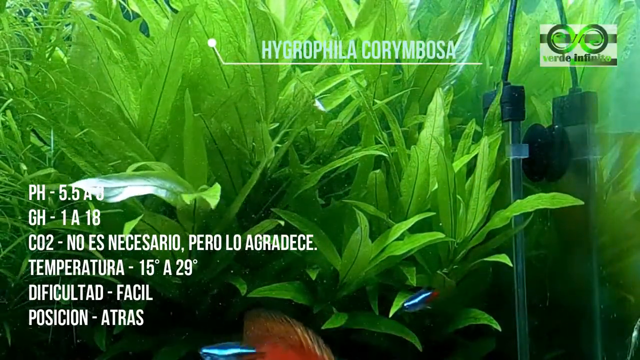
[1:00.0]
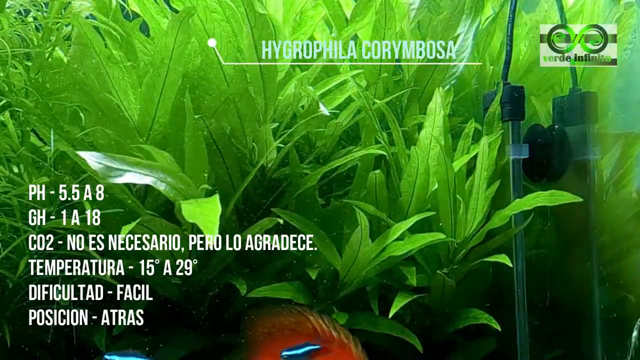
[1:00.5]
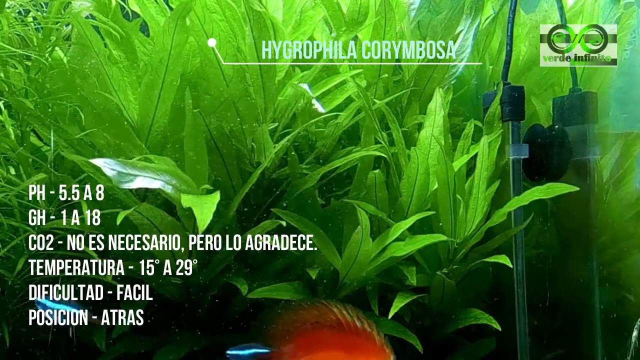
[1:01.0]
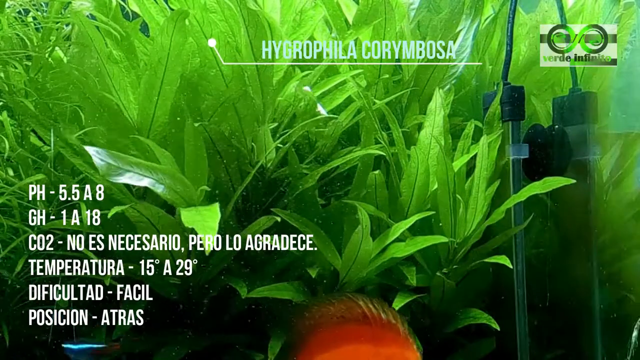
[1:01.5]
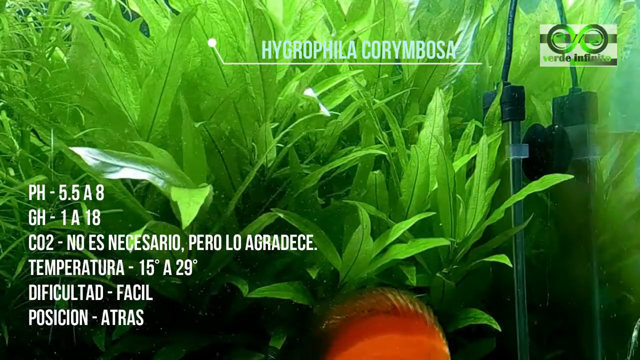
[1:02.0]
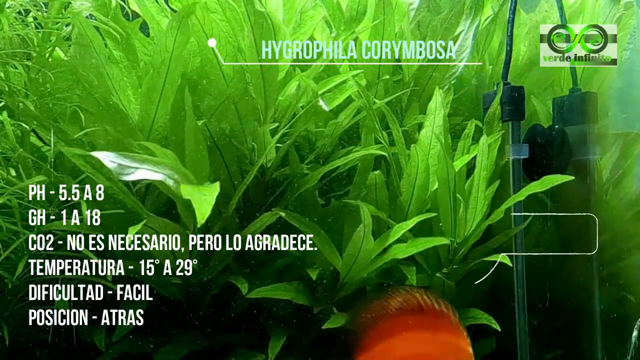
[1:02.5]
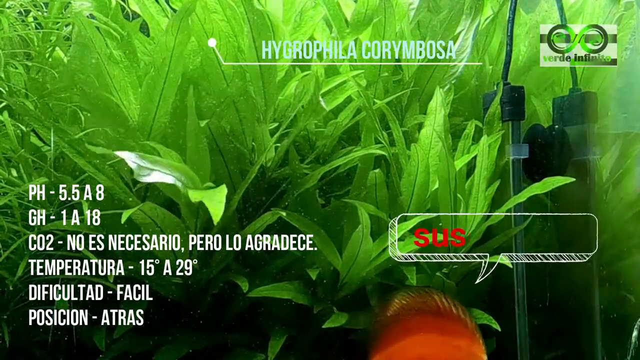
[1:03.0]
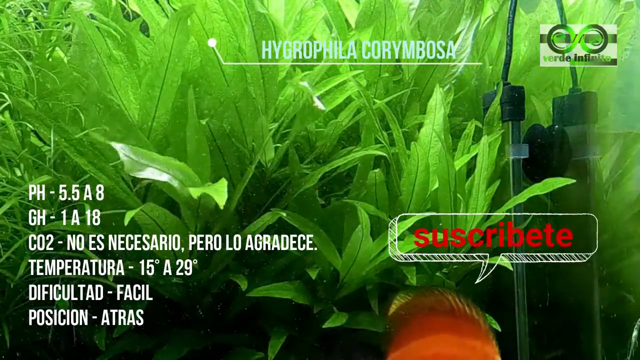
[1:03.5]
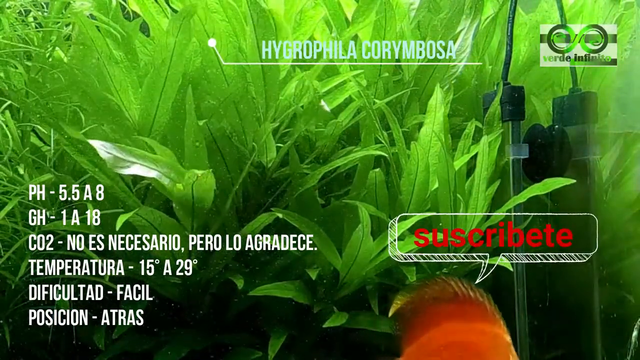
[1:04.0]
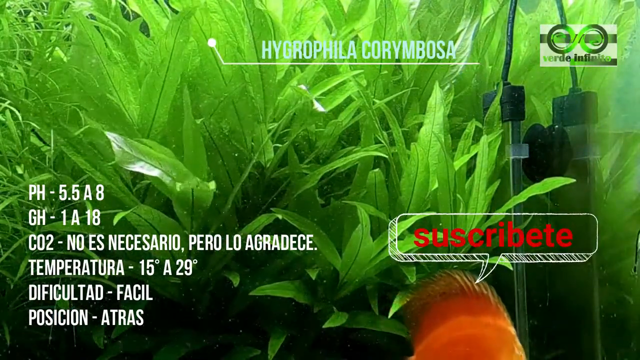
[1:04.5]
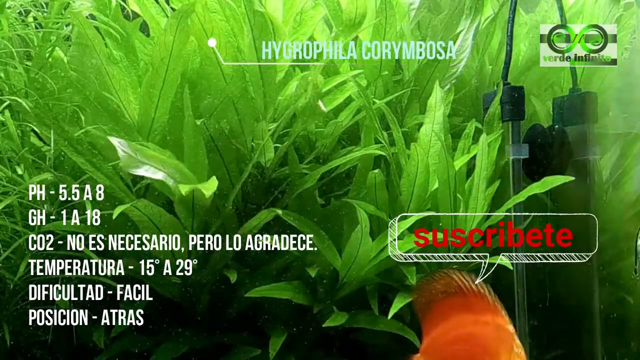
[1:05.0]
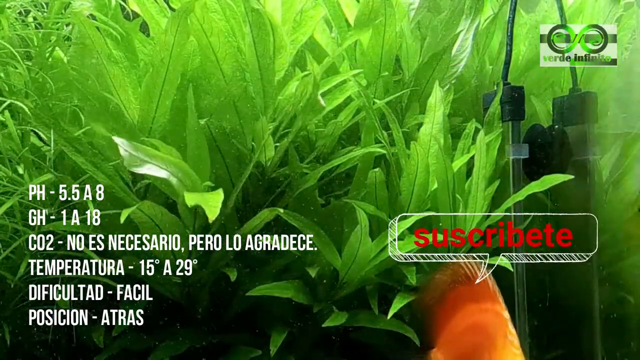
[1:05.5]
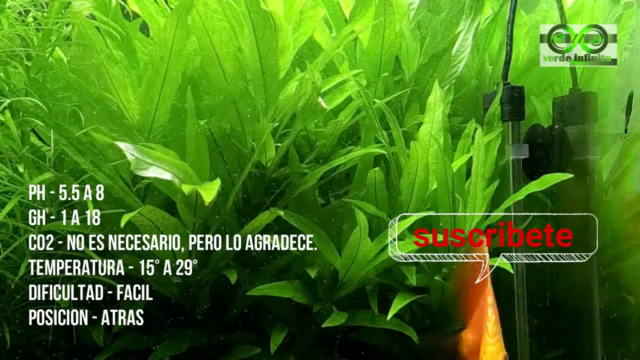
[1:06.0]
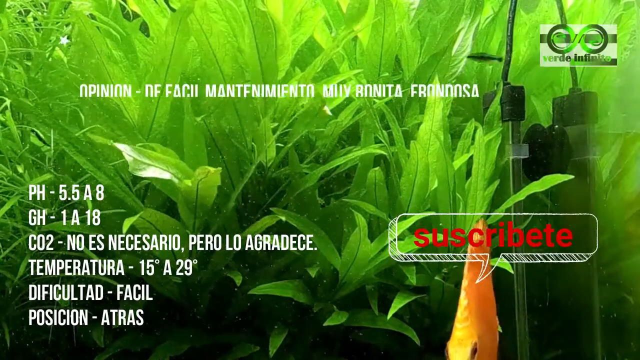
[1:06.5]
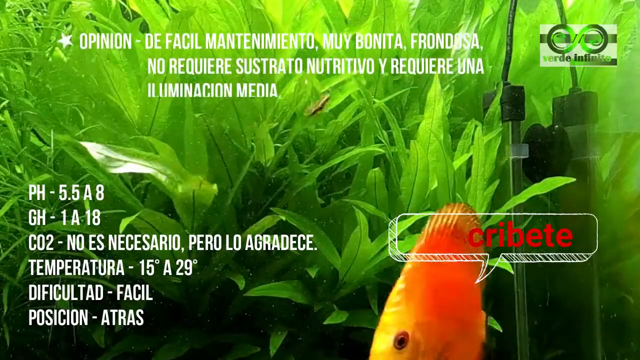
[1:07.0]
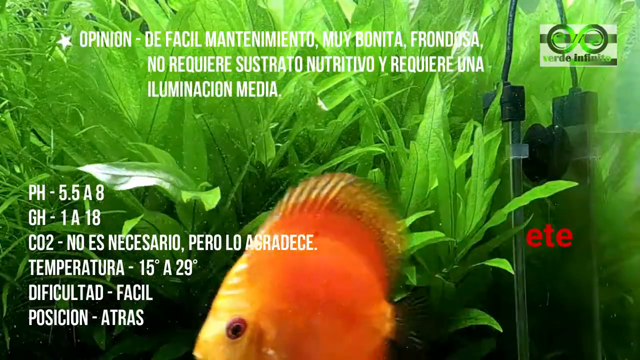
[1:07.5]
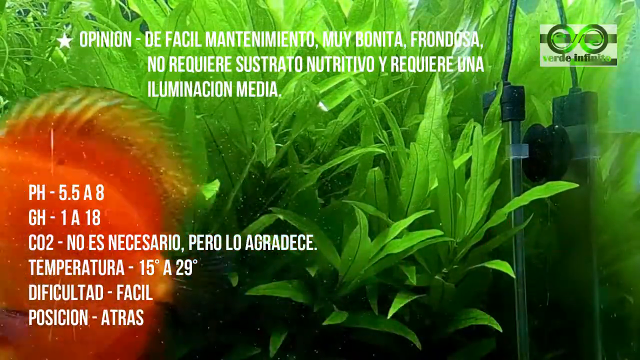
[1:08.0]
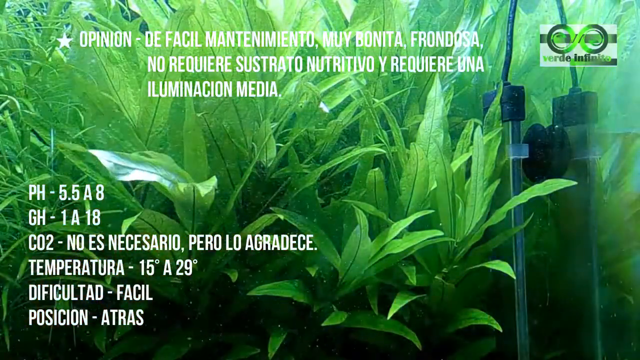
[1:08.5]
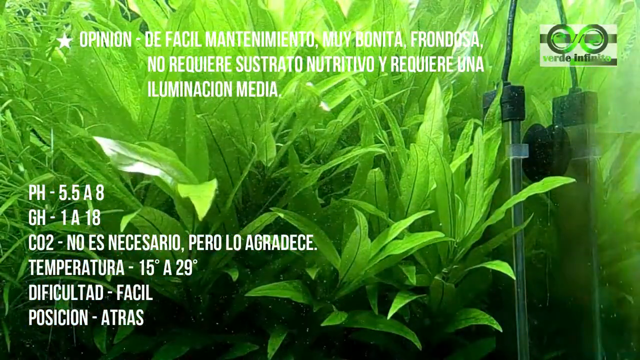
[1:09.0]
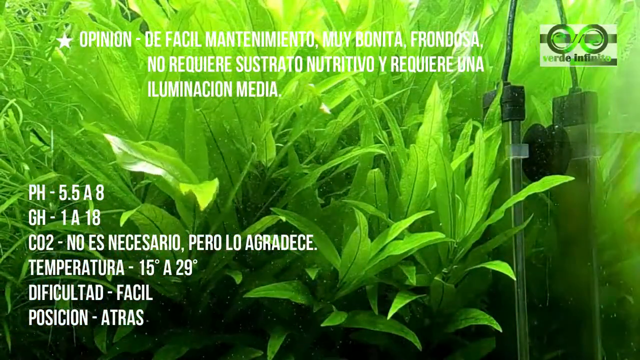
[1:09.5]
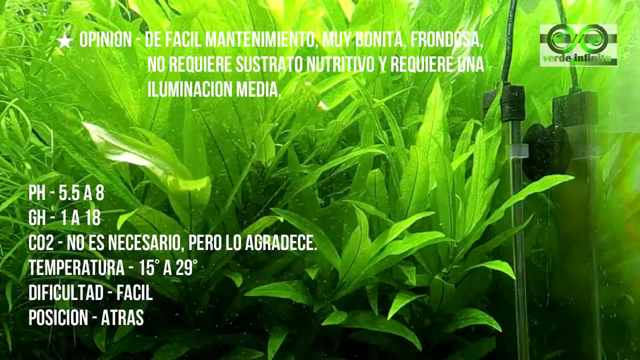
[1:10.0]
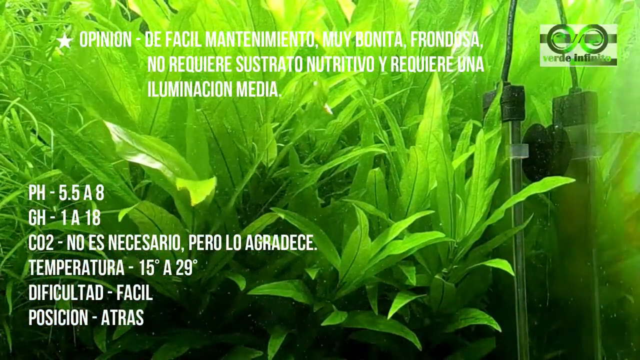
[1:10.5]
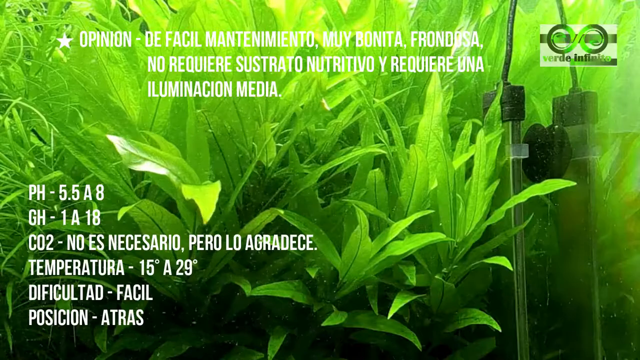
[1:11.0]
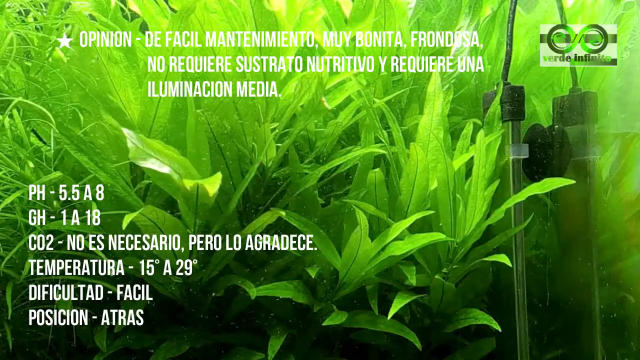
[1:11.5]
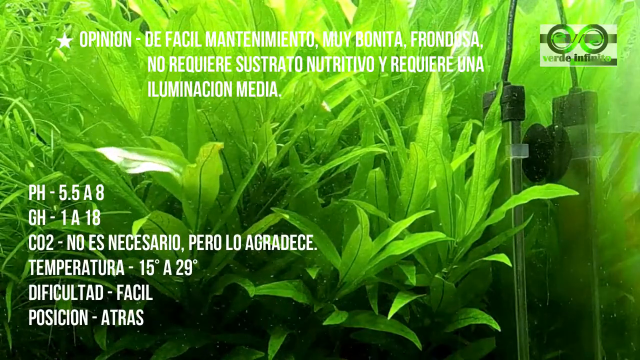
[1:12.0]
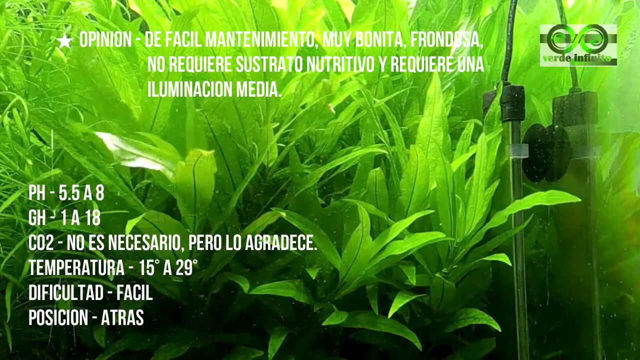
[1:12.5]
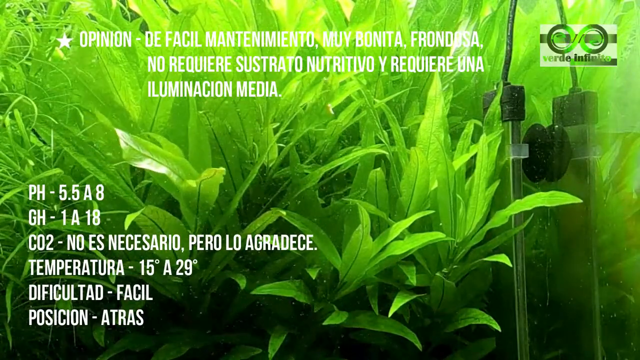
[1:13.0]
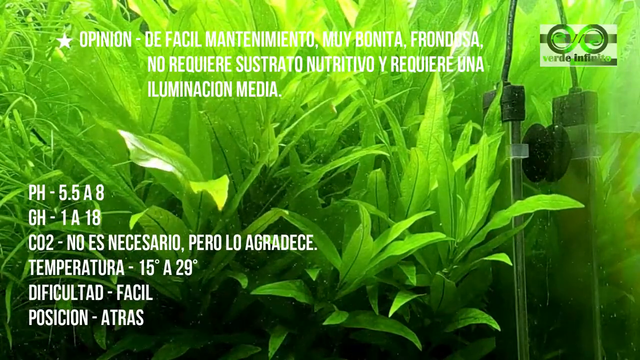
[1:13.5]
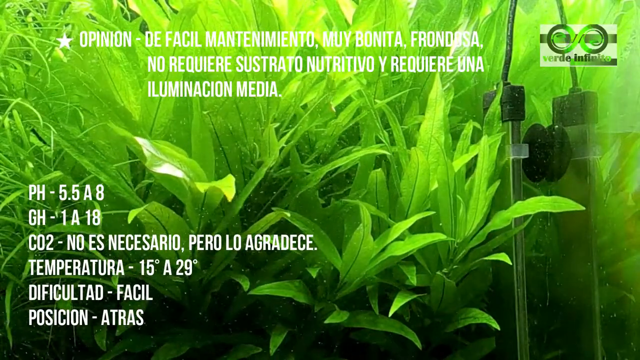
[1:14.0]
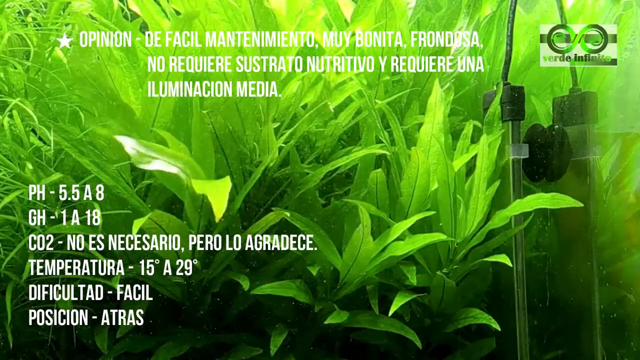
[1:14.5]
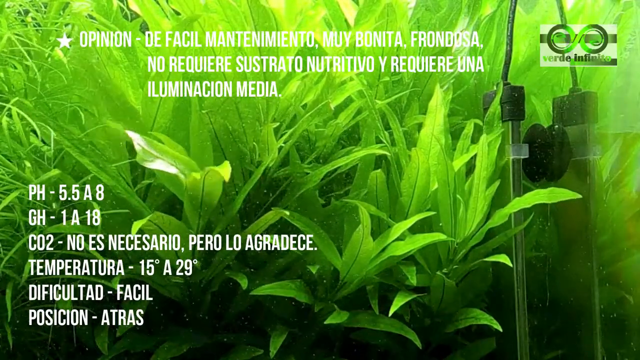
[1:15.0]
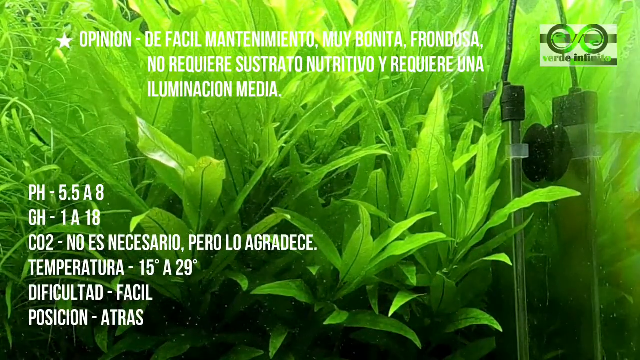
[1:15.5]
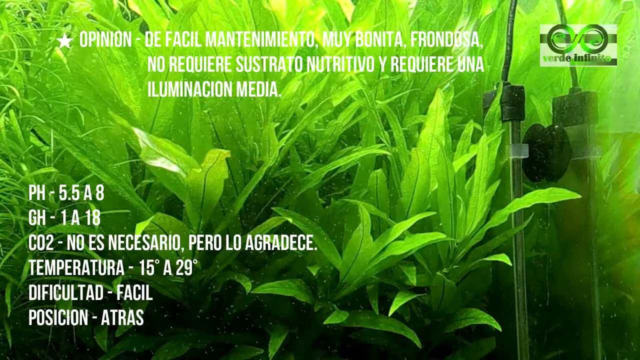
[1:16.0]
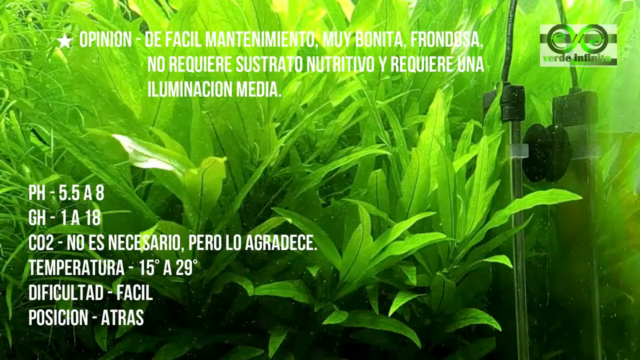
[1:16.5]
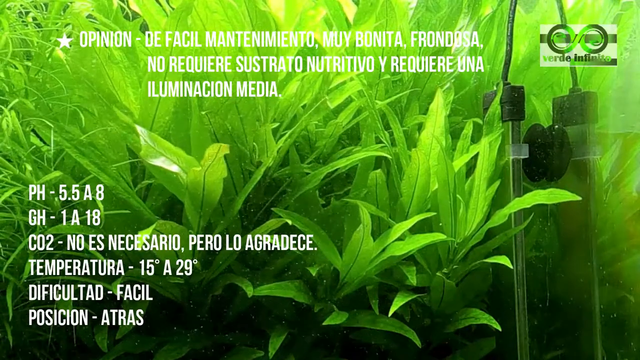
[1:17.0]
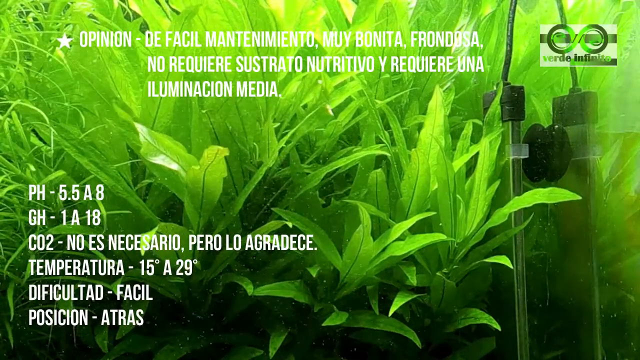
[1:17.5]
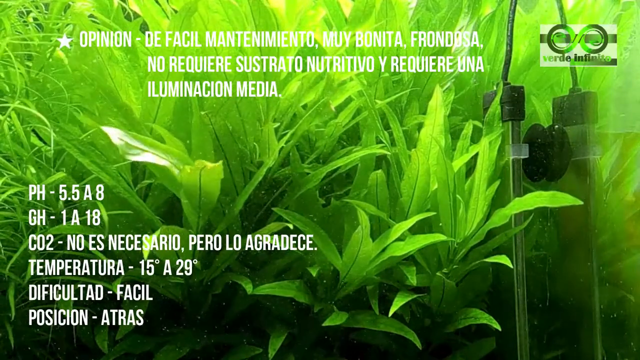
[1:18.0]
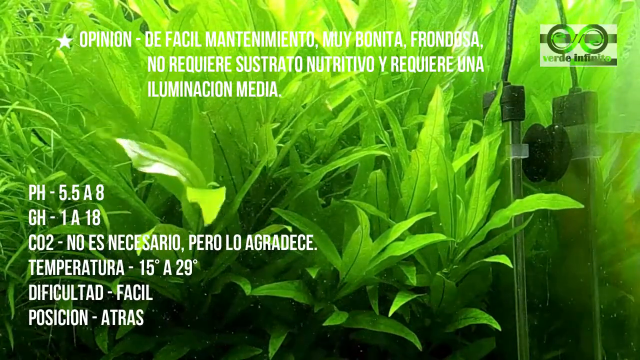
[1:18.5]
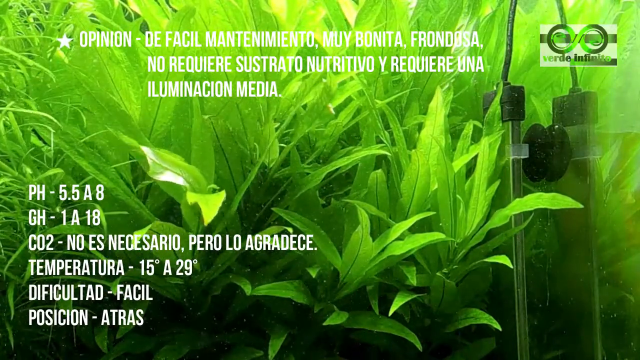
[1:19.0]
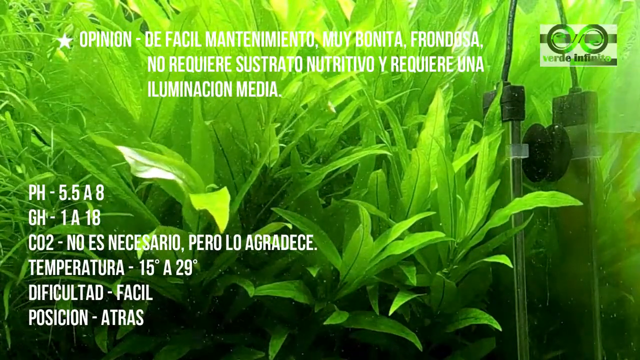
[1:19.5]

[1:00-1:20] The view of the fish tank continues, with lush green plant life in the background and equipment, apparently for monitoring and maintaining the tank, on the right of the screen within the tank, along with the Verde Infinitivo brand logo at the top right. An orange fish seems to lurk at the bottom of the screen, gradually coming into the picture; it is light orange at the front and a darker orange with scales at the back. It moves very quickly until it disappears, and then red text appears that says "subscribe." White text at the top, apparently in Spanish, seems to say that these tanks are beautiful, easy to maintain, and do not require a lot of nutrients or other work. Text with the tank's statistics, such as pH, CO2 and temperature, remains unchanged from earlier. The orange fish does not return.